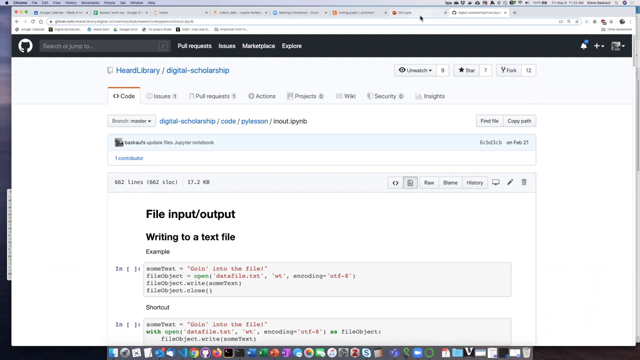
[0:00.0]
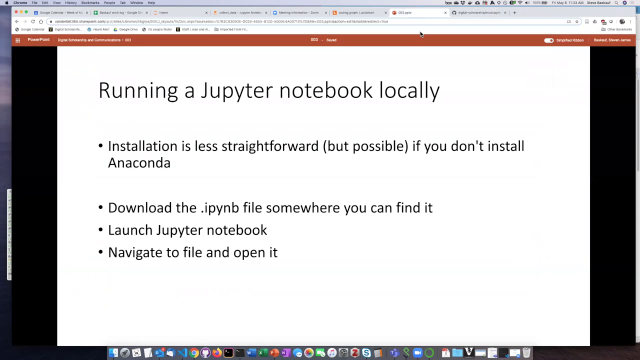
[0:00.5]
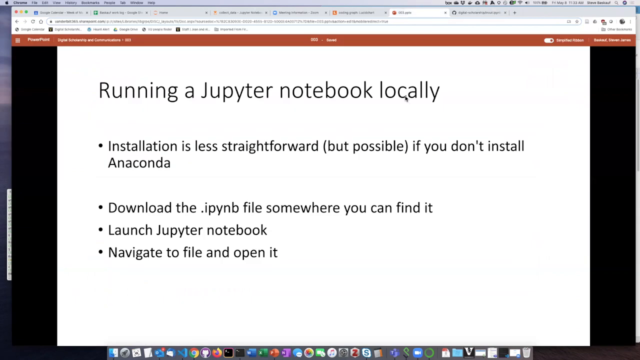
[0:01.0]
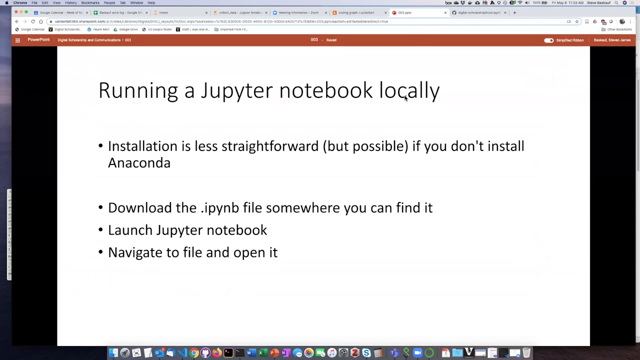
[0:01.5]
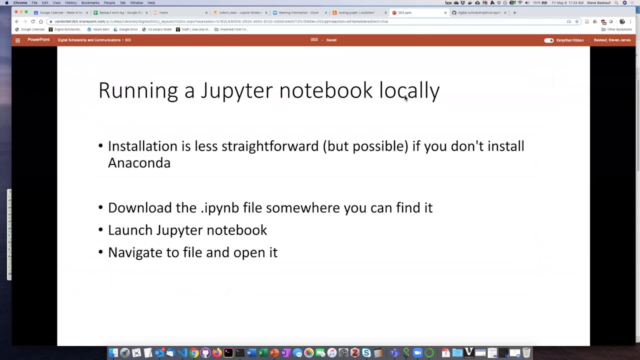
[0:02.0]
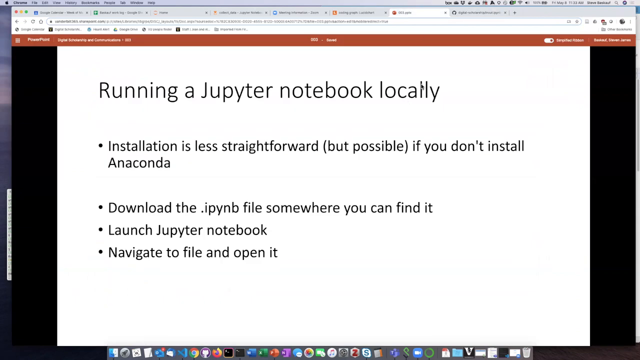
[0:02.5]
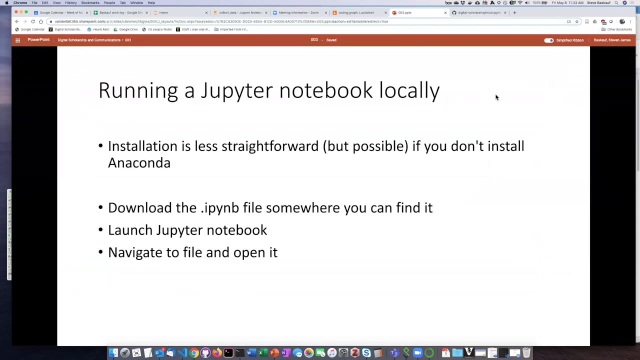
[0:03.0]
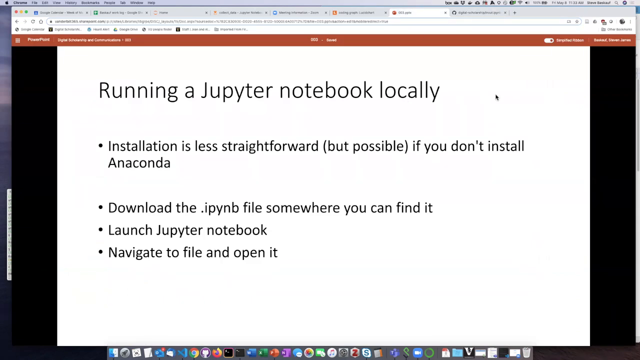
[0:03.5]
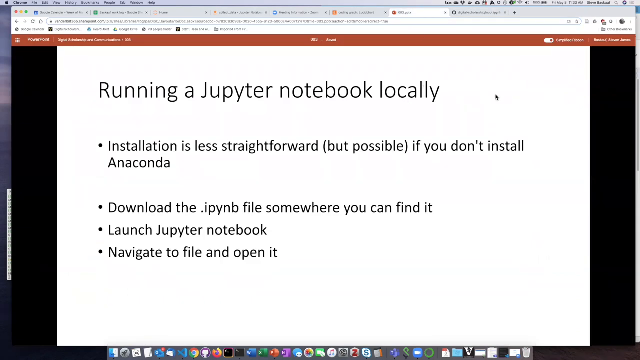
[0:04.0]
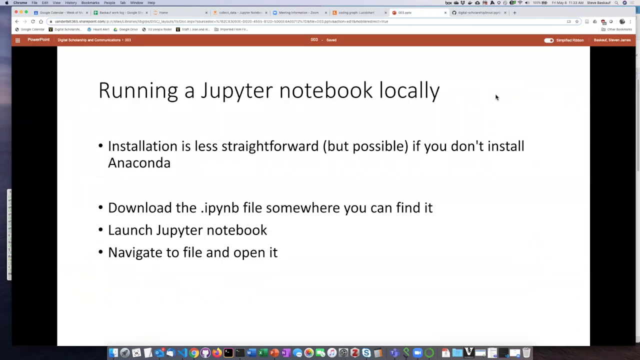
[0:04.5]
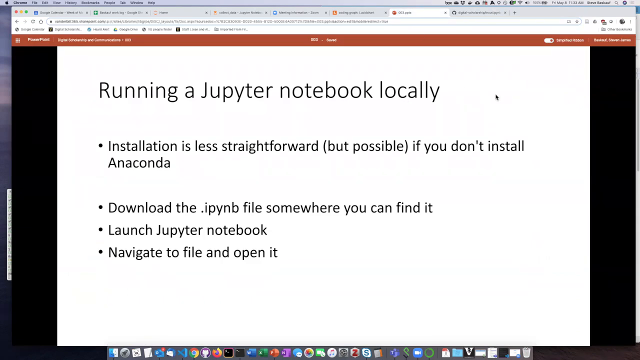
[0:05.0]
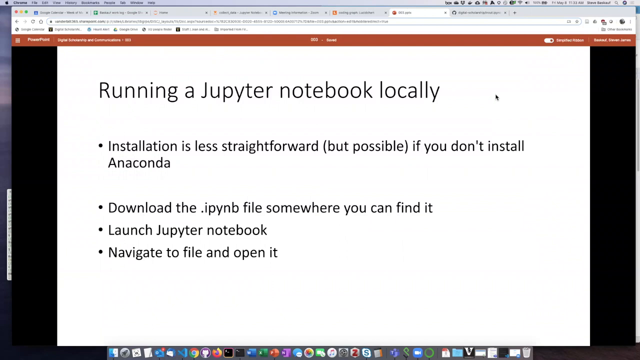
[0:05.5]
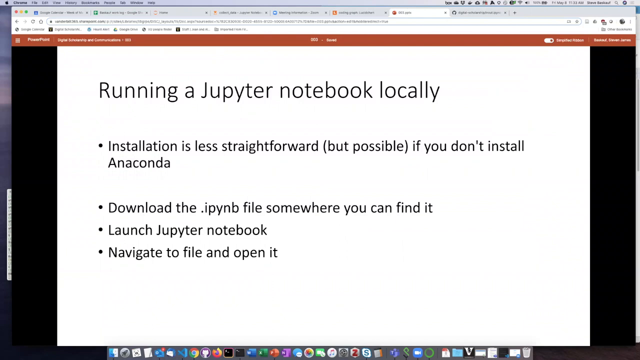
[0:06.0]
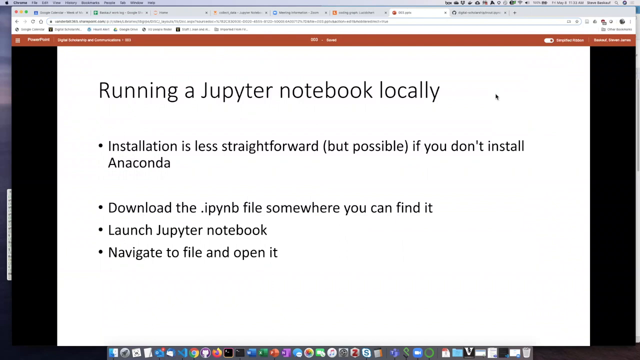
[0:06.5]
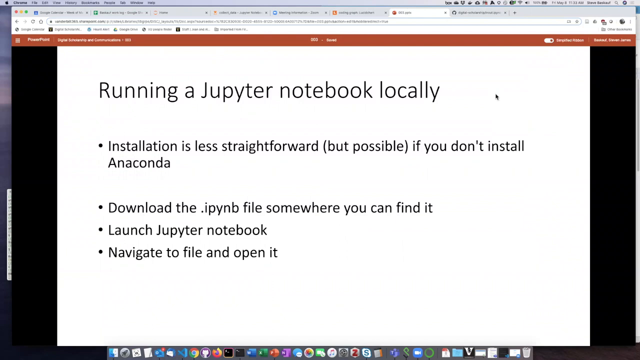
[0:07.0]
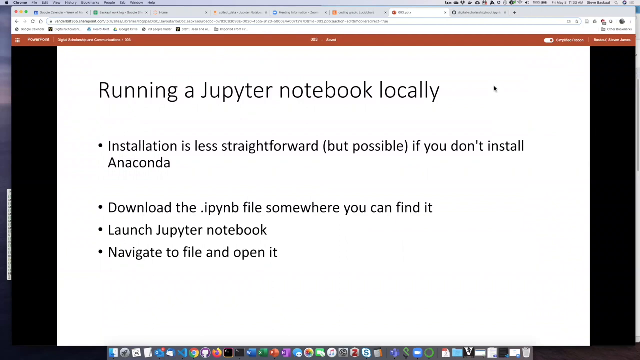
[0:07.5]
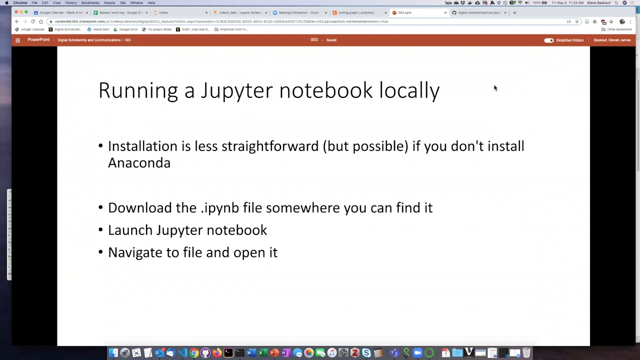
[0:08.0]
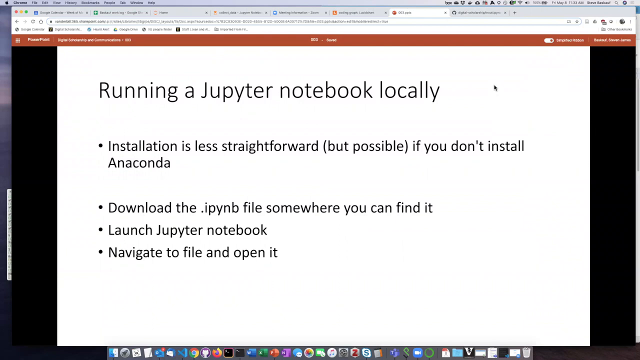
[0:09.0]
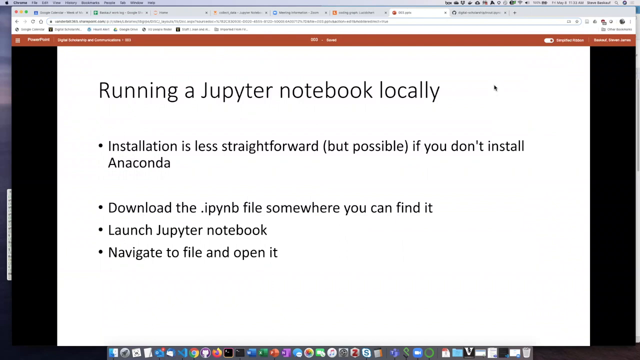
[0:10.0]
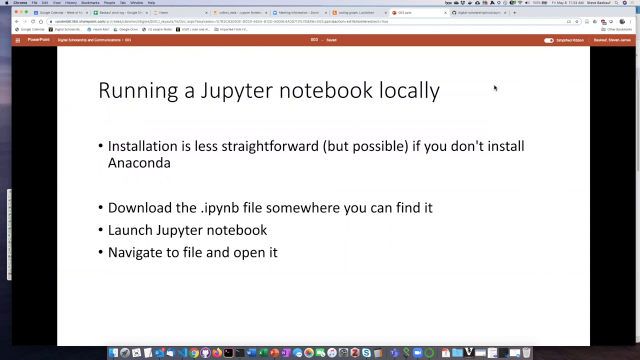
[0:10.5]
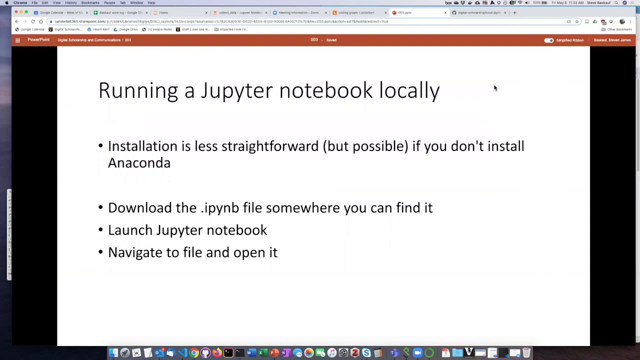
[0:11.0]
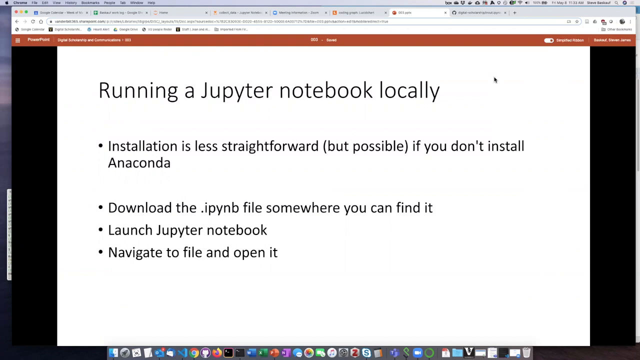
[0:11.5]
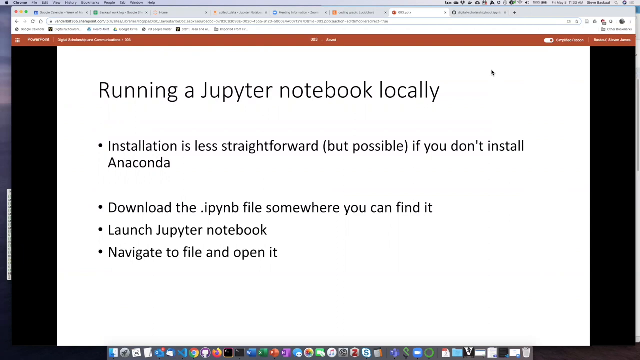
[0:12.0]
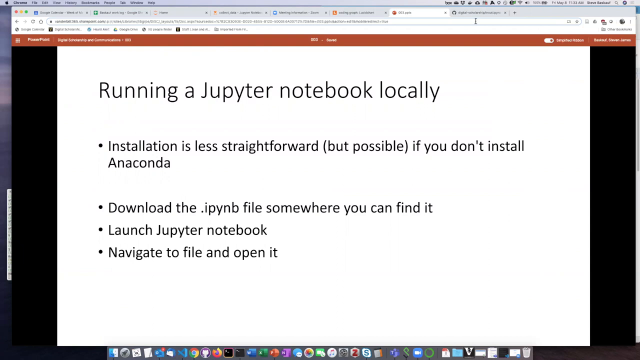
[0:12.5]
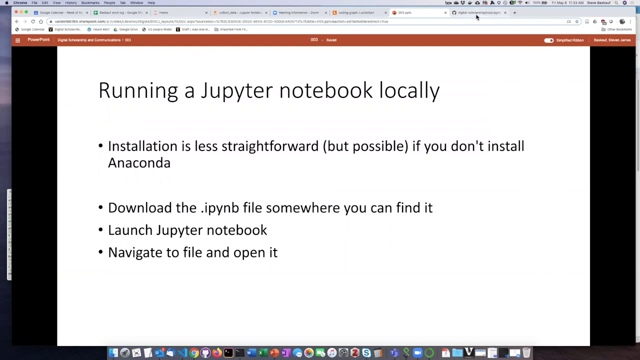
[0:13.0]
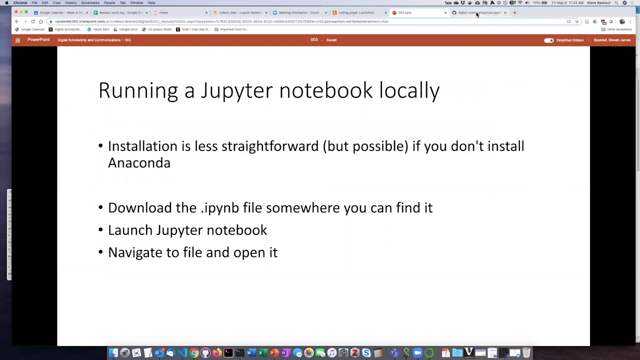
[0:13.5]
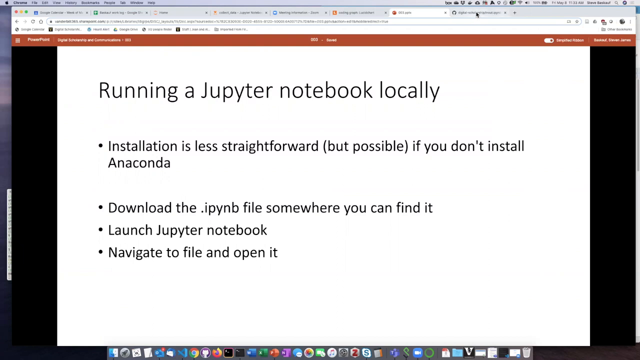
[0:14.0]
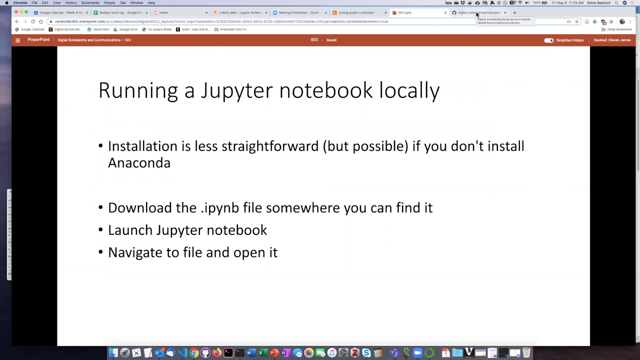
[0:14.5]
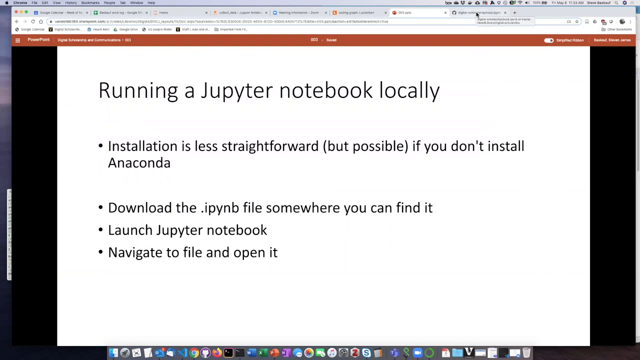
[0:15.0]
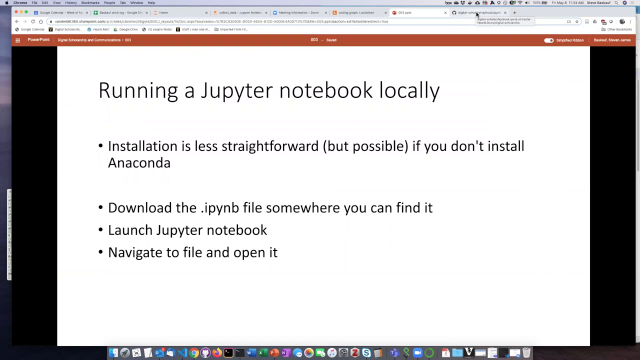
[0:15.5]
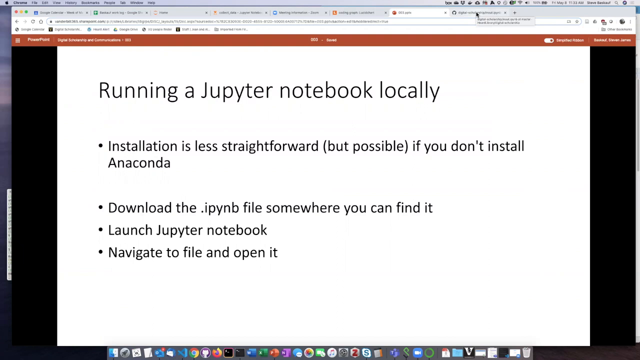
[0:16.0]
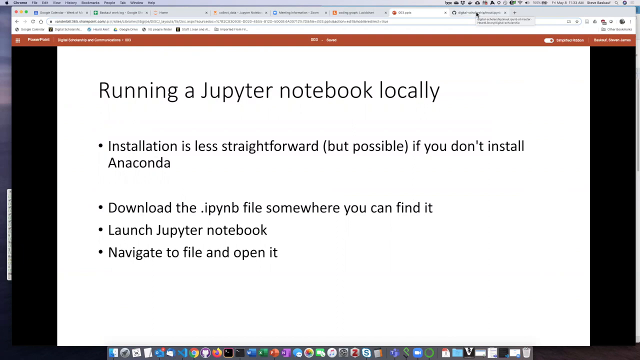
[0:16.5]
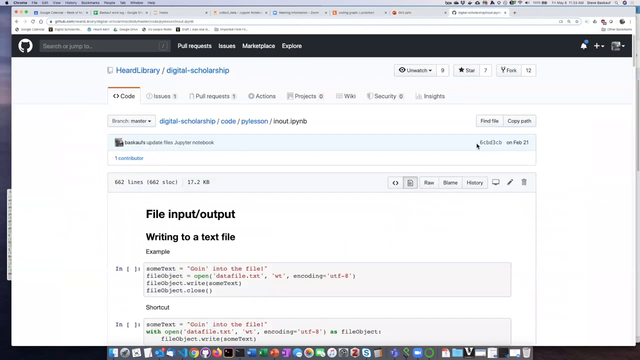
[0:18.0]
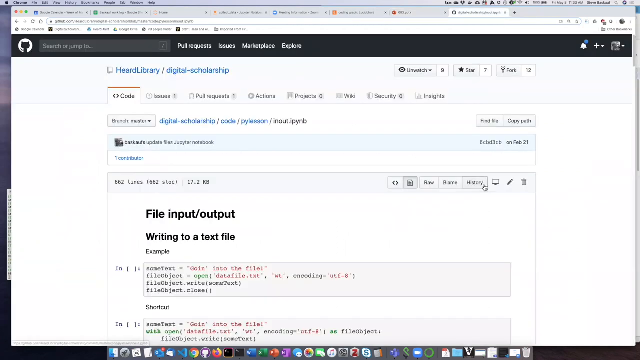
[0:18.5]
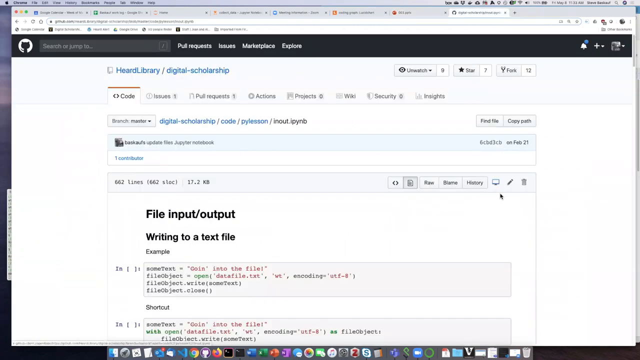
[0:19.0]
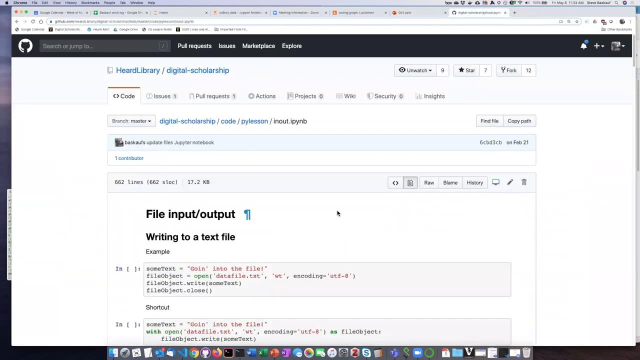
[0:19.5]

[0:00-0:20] What appears to be some kind of Microsoft document, possibly a PowerPoint or a Word document, is shown as a white page with black type. In slightly larger type it reads "running a Jupyter notebook locally." Below, in smaller writing, a bullet point reads "installation is less straightforward (but possible if you don't install Anaconda)." After a double space, another bullet point reads "download the .IPYNB file somewhere you can find it," followed by the bullet points "launch the Jupyter notebook" and "navigate to file and open it." This stays on the screen for a little while. The cursor is over on the right, to the right of the word "locally," and hovers up to the next tab at the top of the screen and clicks on it. A file opens with eight tabs open at the top, and toward the bottom, in bold black writing, it says "file input / output writing to a text file." Below that there appears to be some kind of HTML code.